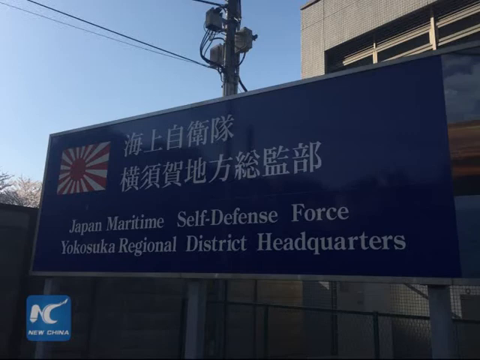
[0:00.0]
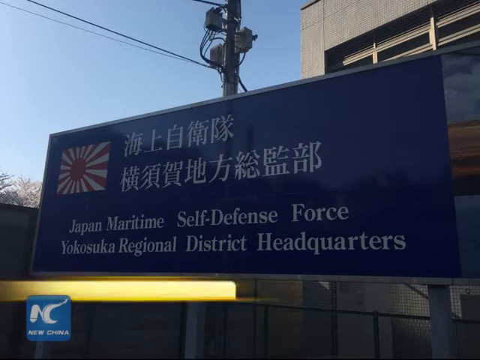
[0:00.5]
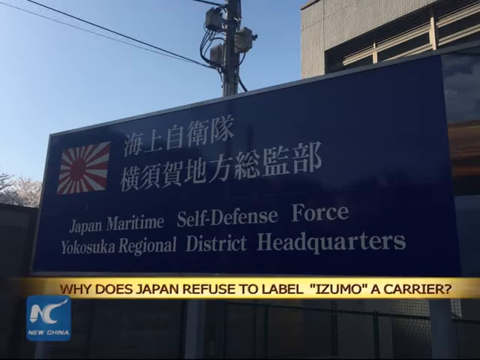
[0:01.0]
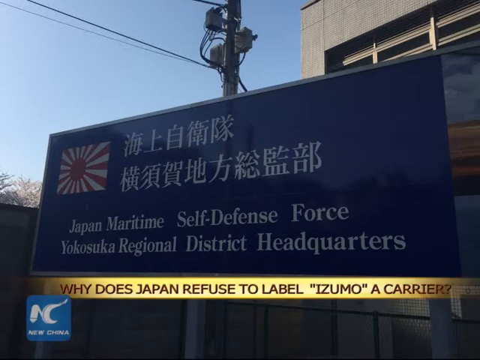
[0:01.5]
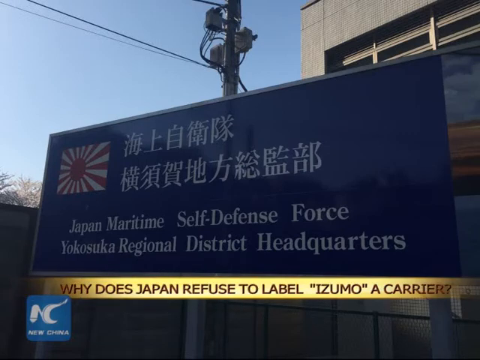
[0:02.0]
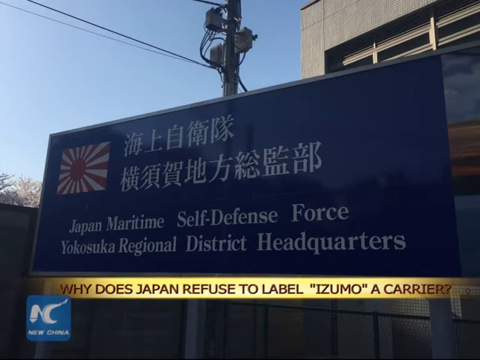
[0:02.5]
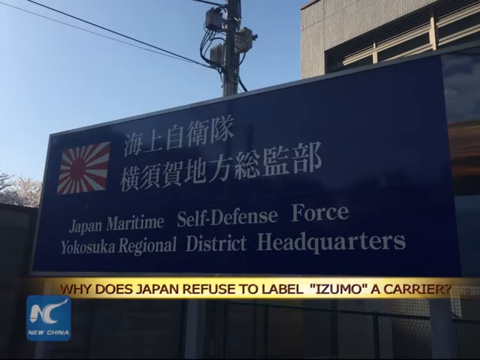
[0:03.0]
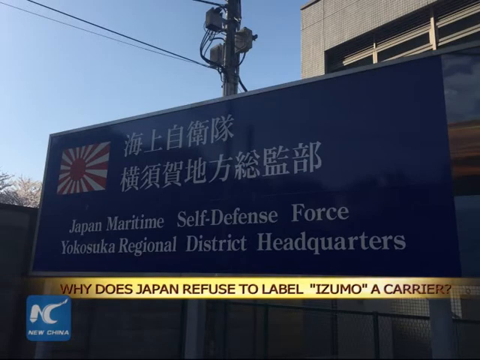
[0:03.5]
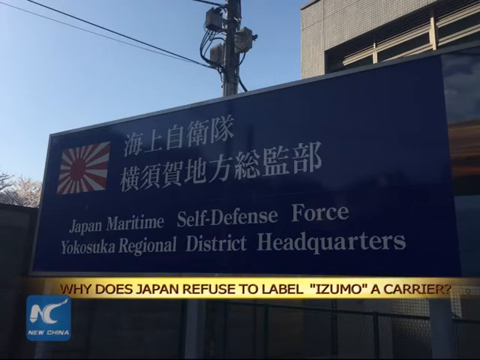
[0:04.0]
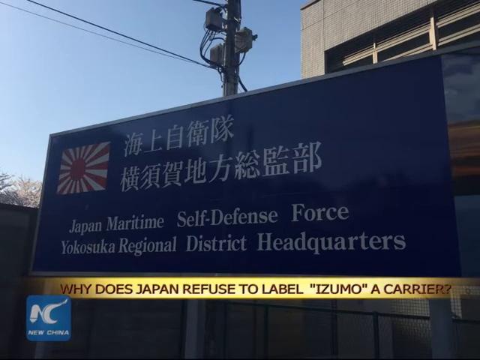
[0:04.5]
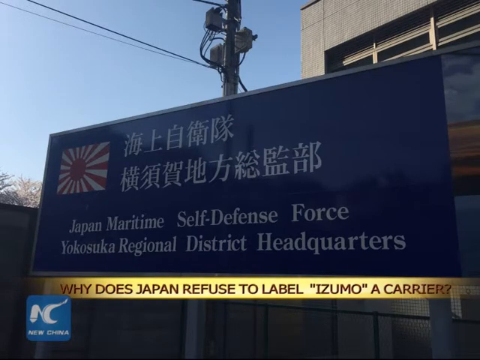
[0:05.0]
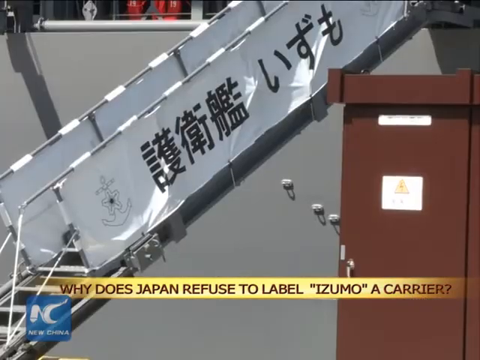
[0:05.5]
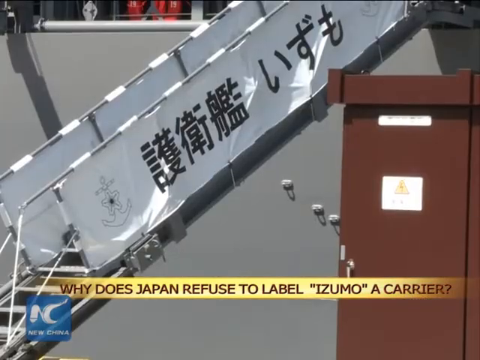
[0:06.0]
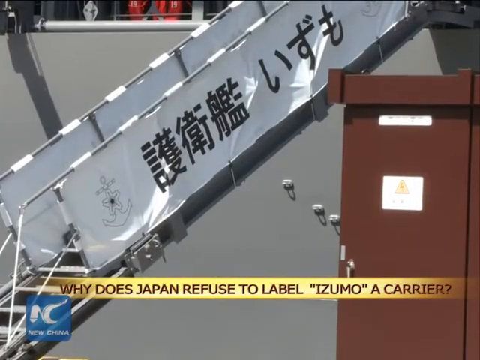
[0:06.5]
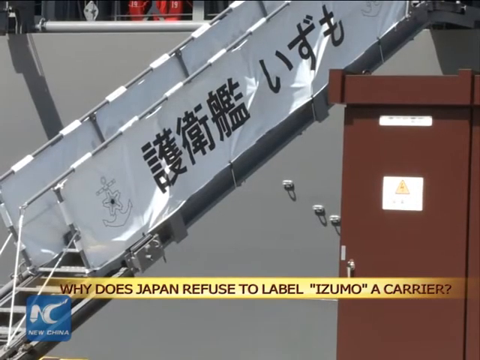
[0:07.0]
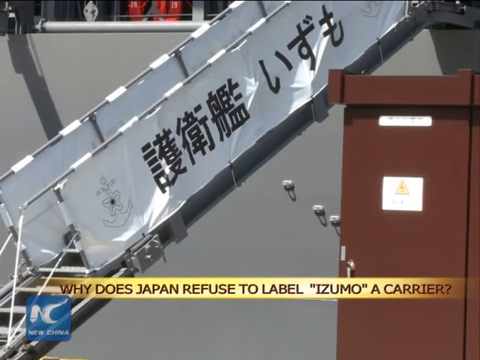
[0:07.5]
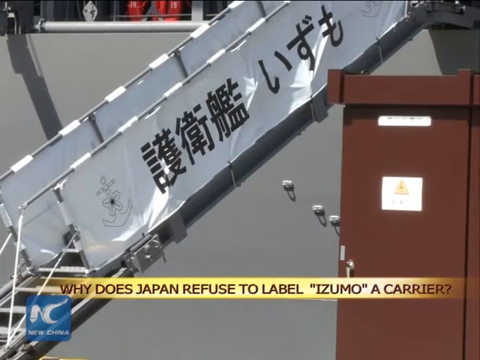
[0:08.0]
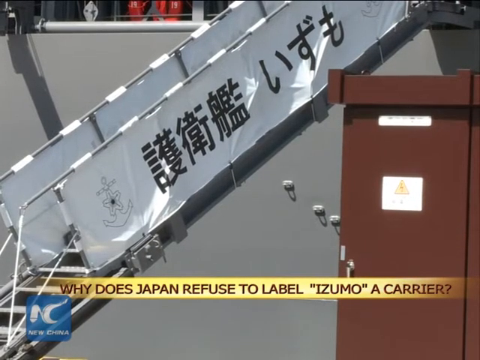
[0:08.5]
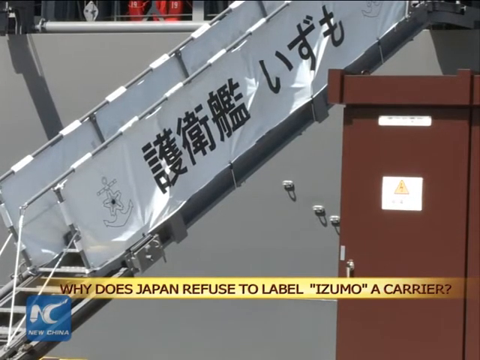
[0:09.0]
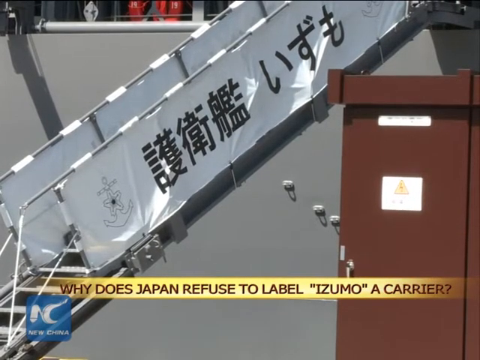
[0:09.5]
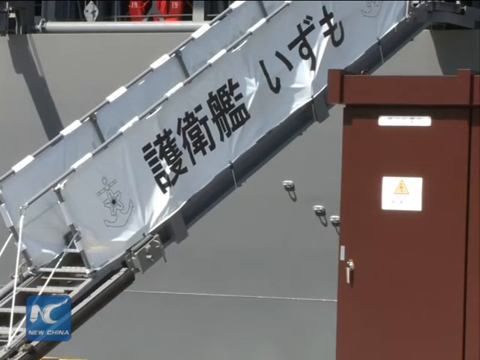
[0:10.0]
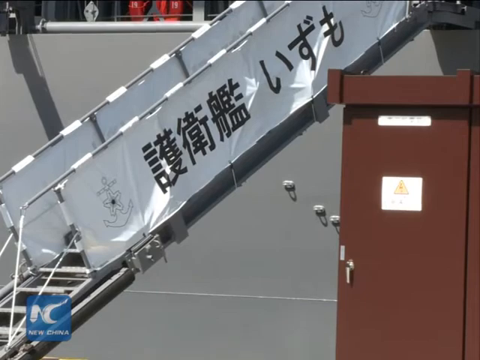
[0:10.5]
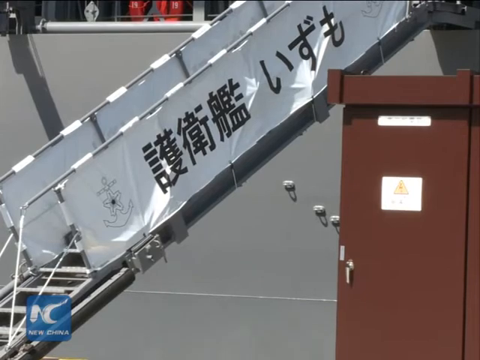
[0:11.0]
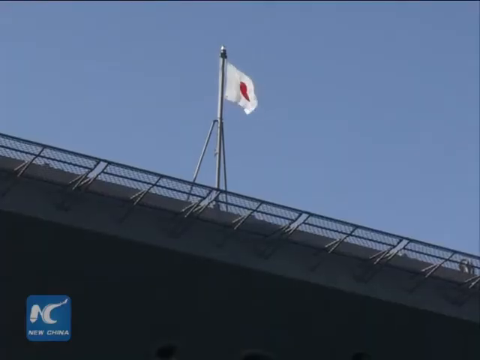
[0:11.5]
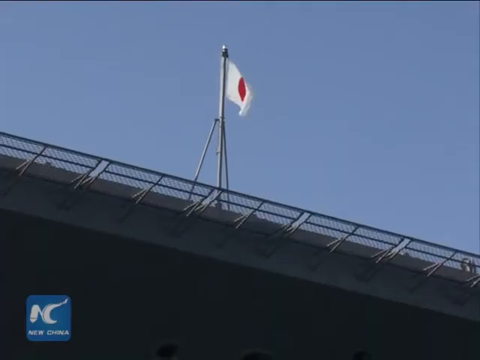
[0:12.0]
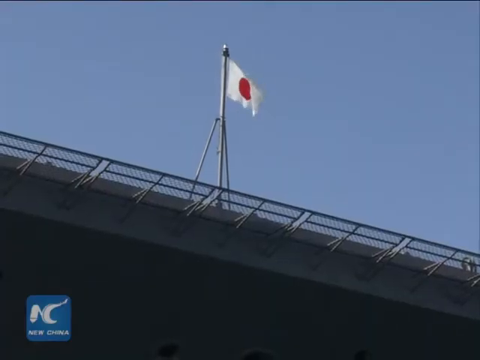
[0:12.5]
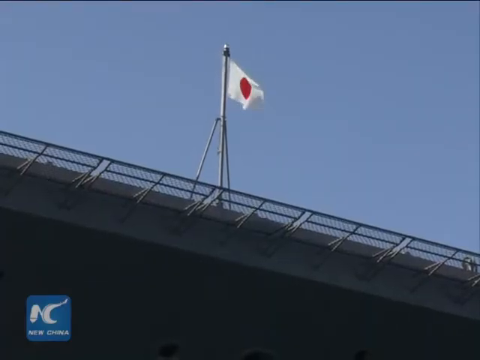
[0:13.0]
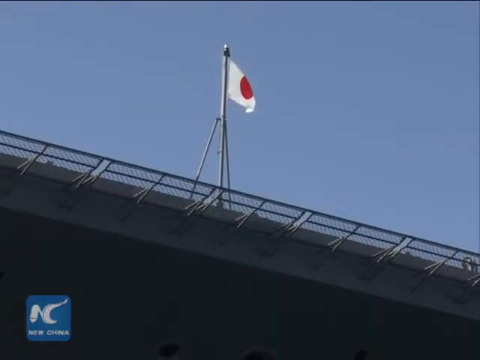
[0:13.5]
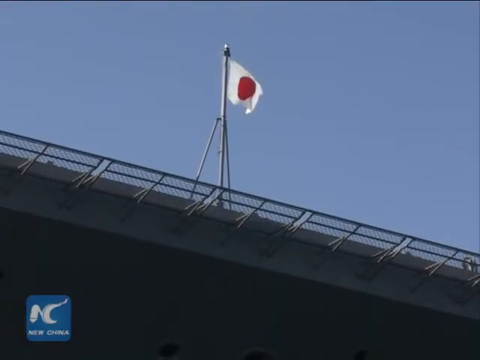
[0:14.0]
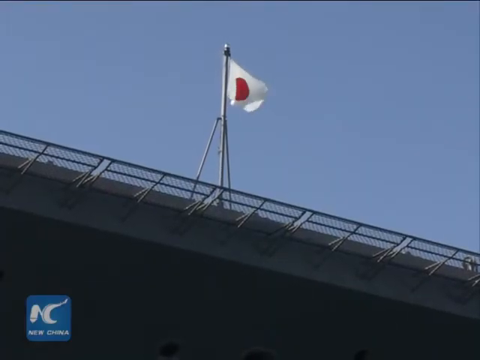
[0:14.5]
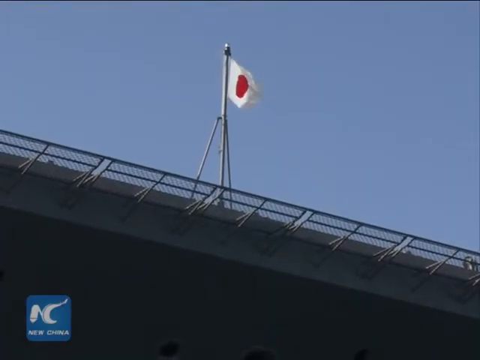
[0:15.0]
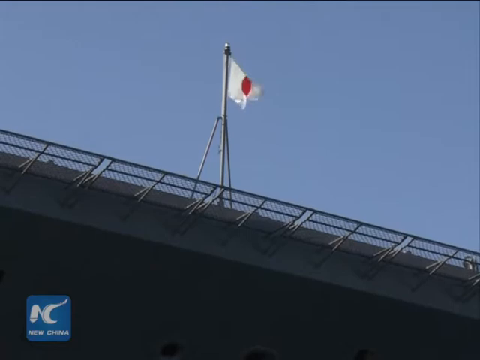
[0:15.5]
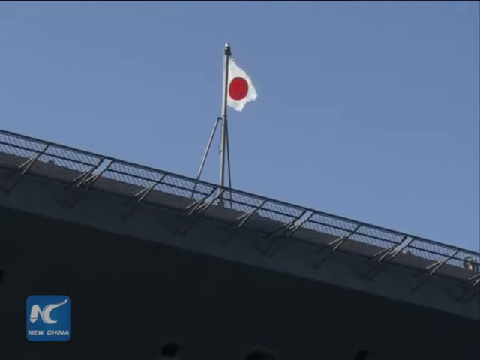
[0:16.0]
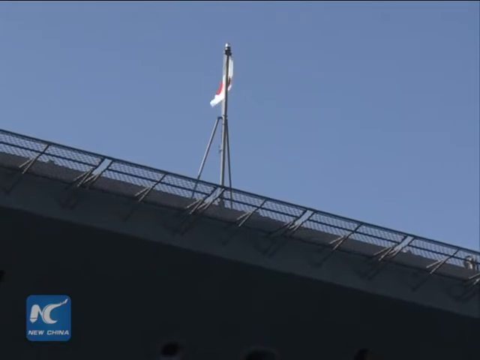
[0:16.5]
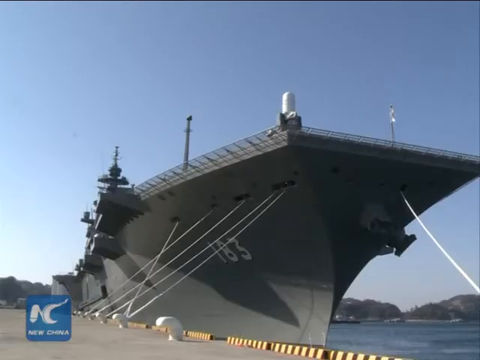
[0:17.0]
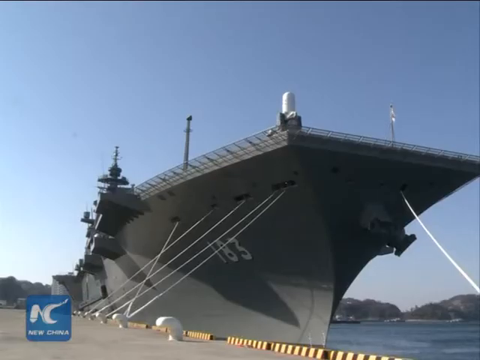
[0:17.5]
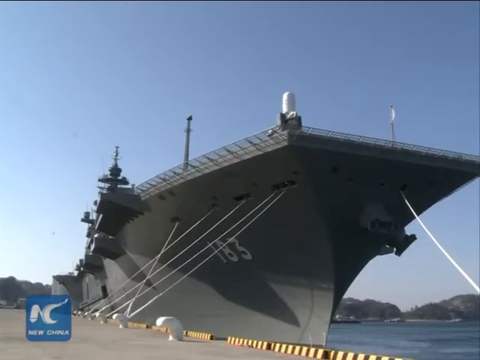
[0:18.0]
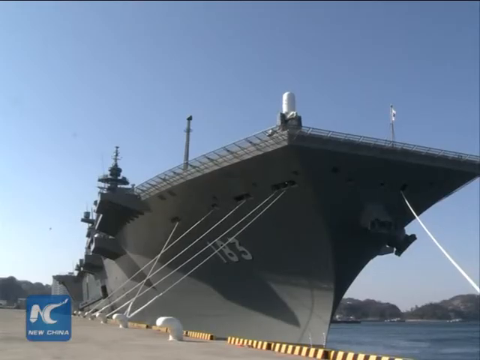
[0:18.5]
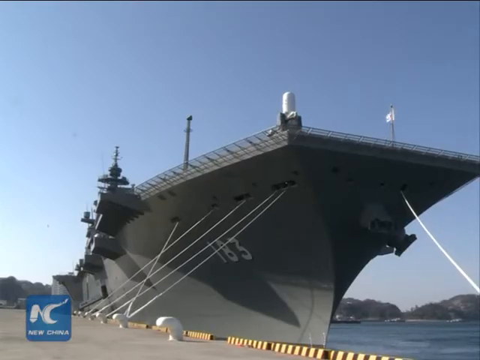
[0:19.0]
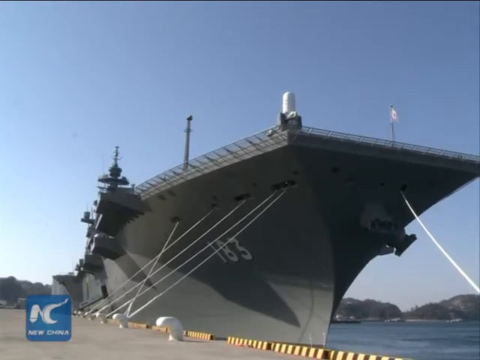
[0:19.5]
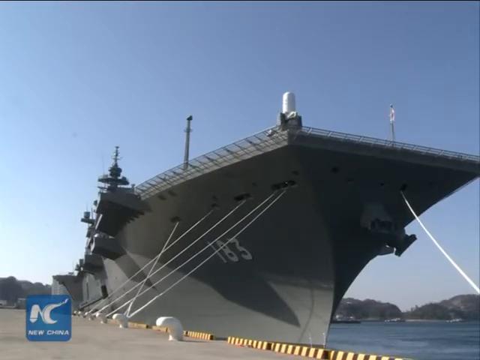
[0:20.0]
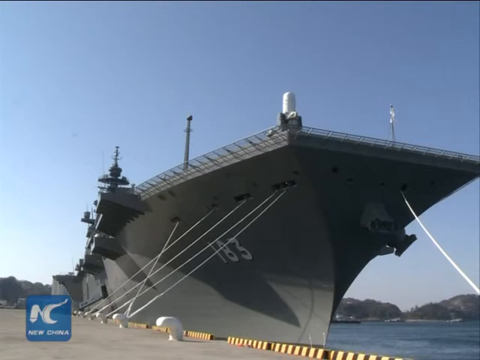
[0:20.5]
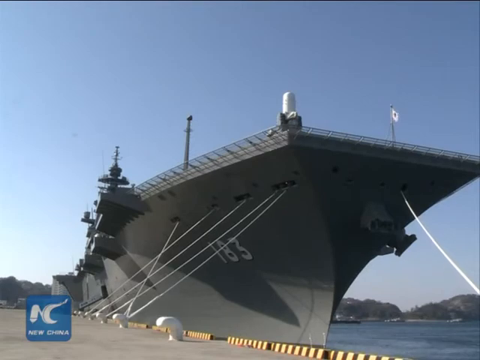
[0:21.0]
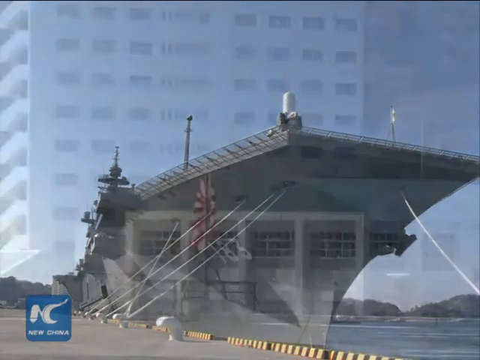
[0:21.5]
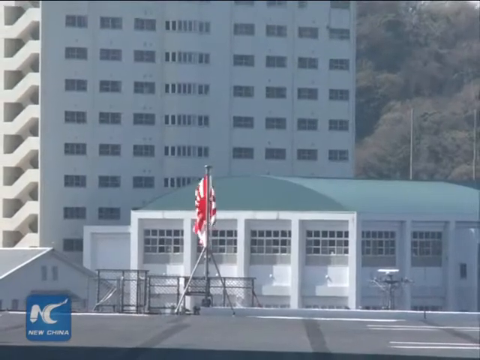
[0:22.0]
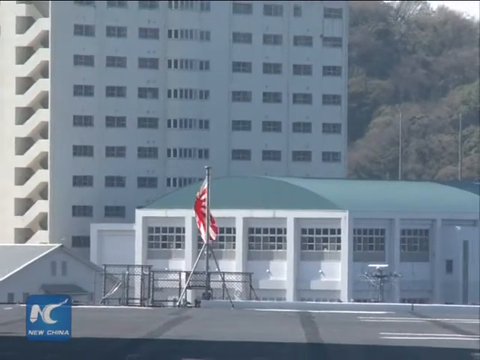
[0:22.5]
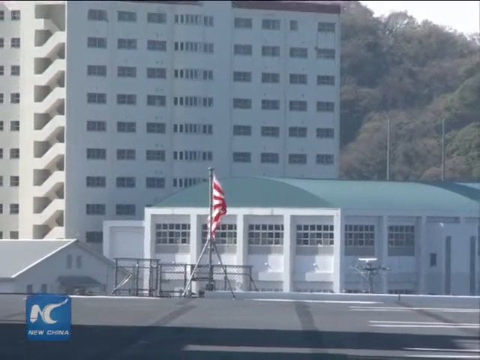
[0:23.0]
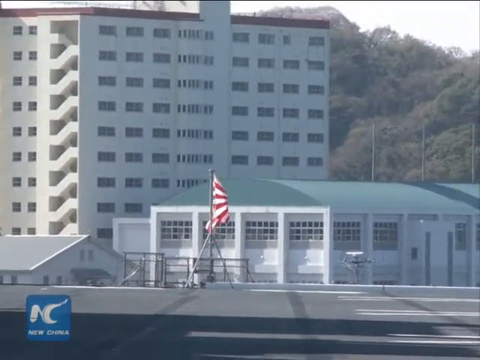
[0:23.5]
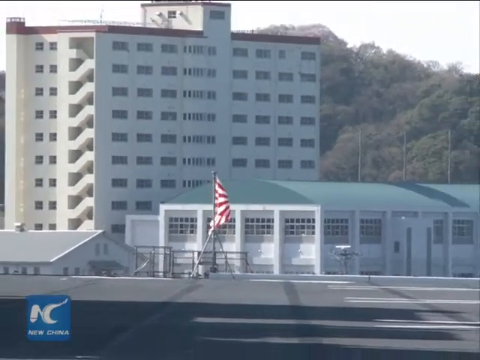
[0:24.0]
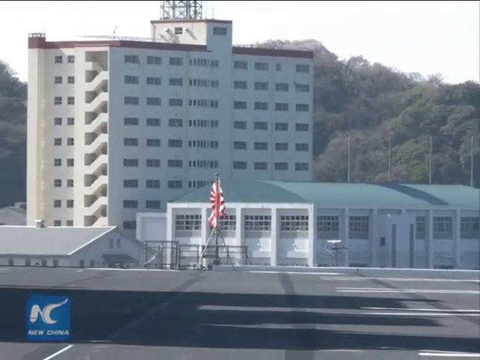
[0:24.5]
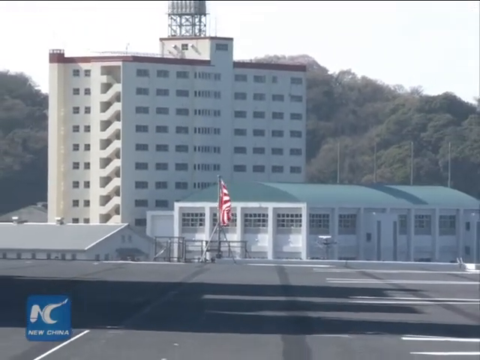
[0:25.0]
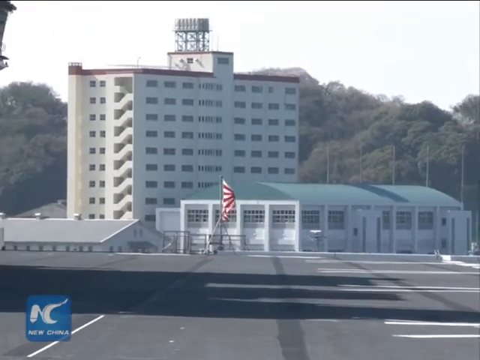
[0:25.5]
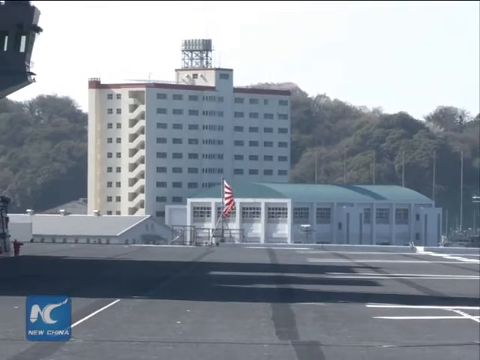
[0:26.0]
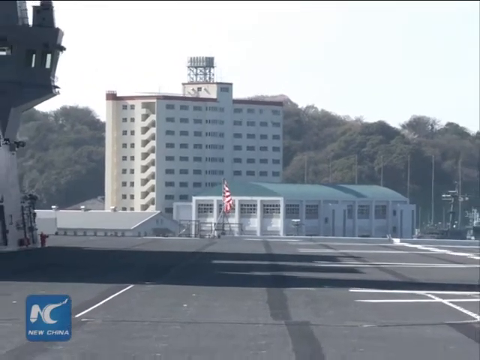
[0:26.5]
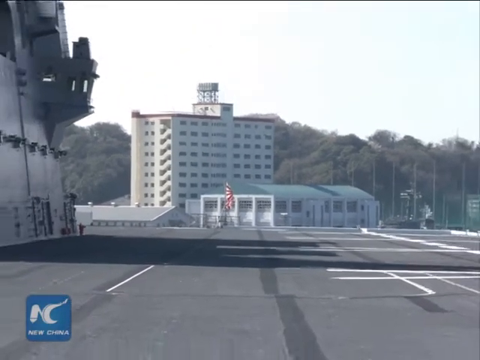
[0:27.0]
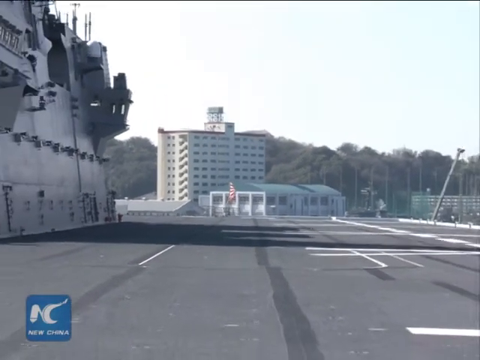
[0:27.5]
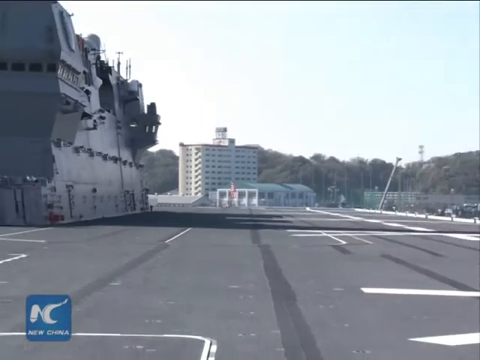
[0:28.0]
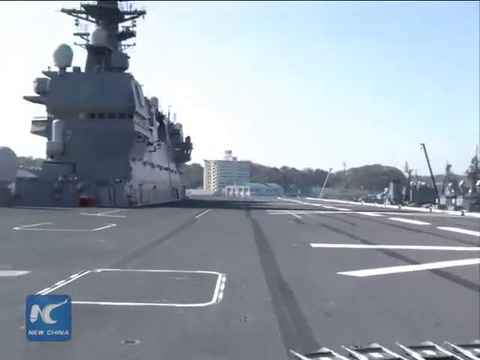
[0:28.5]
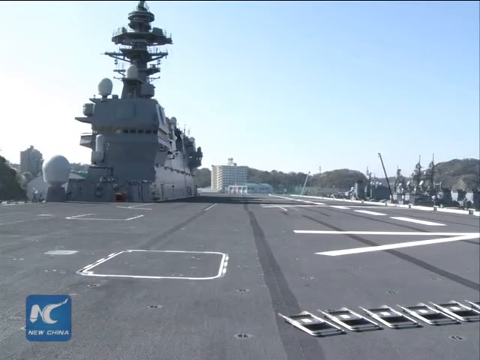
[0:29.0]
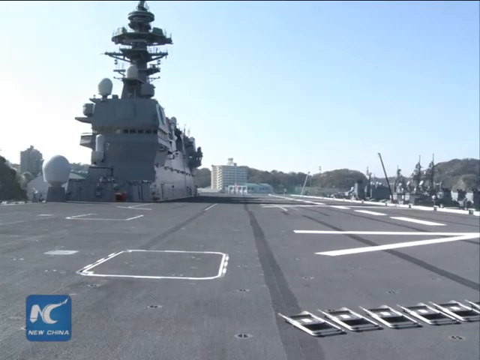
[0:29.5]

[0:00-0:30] In Japan, a large sign painted blue has the Japanese flag on its side and reads "Japan Maritime Self-Defense Force Yokosuka Regional District Headquarters." A caption at the bottom reads "why does Japan refuse to label Izumo a carrier?", suggesting this is apparently a news story. A shot shows a ship and a boarding ramp with Japanese letters on its side; everything is white, and next to it is a brown utility box. Atop the ship, a Japanese flag waves in the wind under clear skies. A battleship with the numbers 183 painted on its side is shown, everything in gray. The shot then pans out from a couple of buildings located in the naval yard. The skies overhead appear clear, with no clouds at all, and the sun is shining on what seems to be the bay.